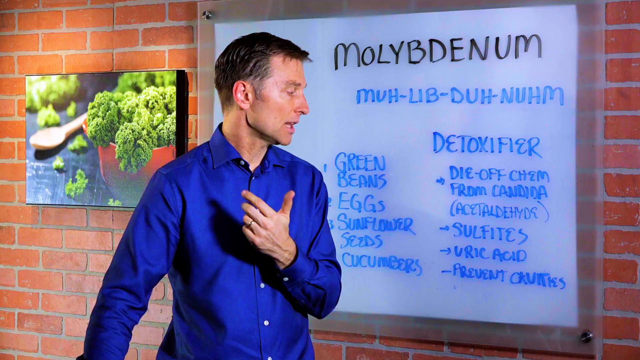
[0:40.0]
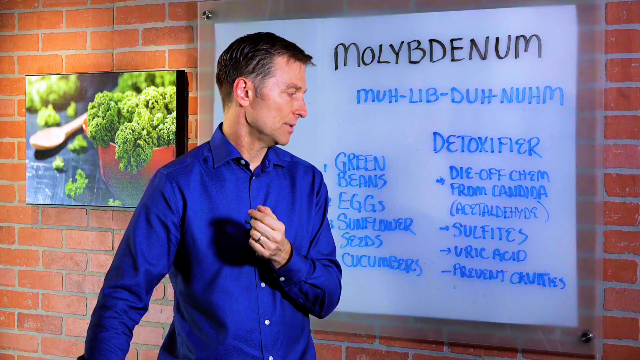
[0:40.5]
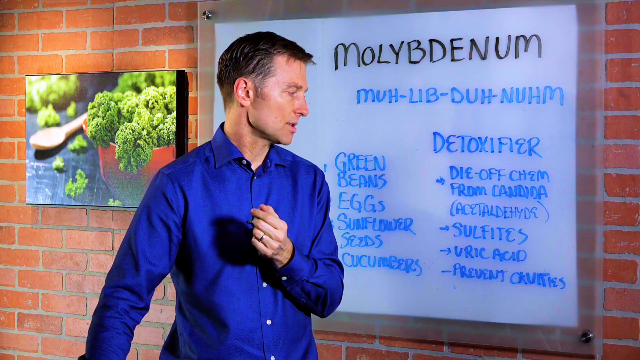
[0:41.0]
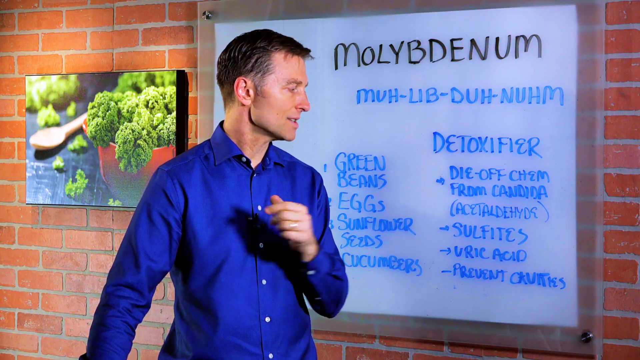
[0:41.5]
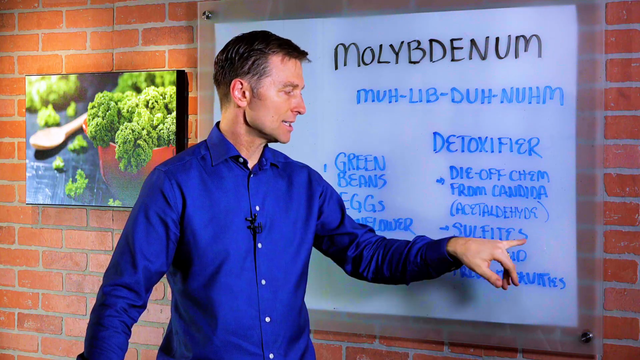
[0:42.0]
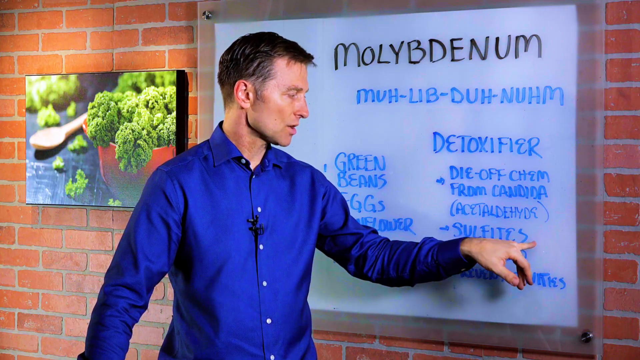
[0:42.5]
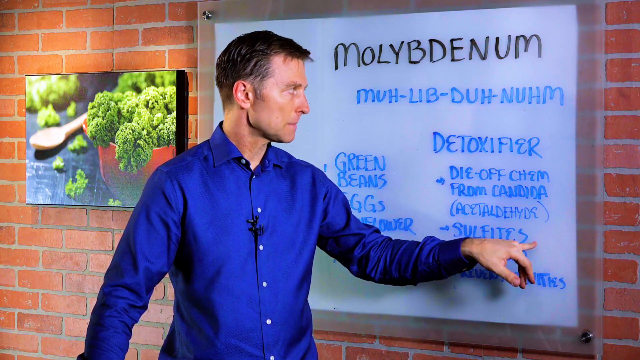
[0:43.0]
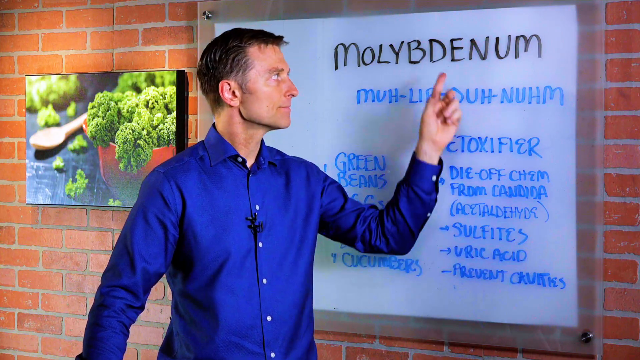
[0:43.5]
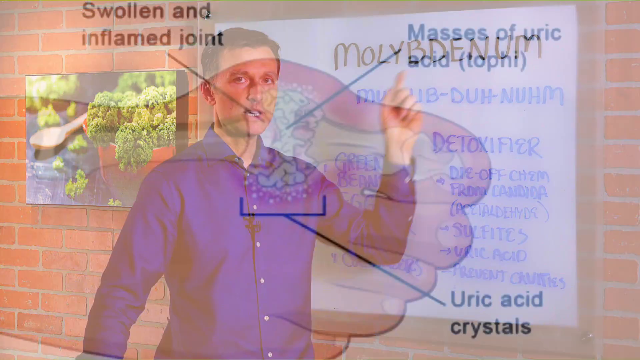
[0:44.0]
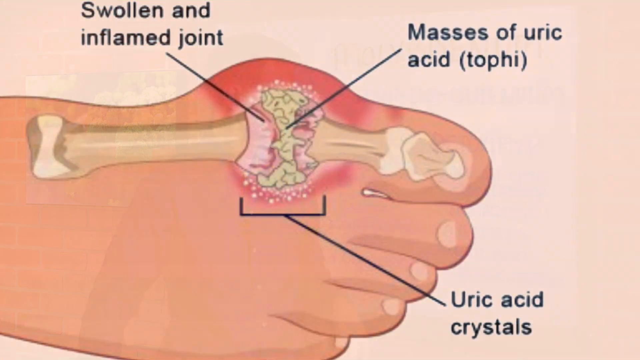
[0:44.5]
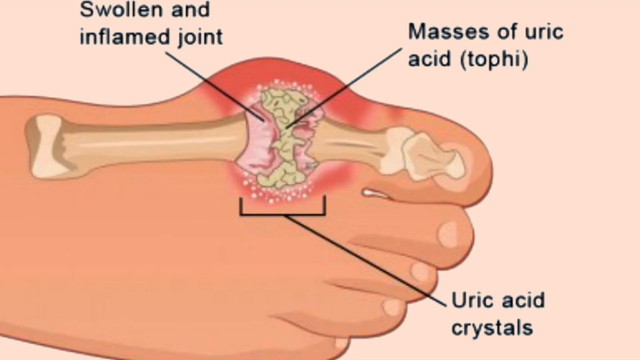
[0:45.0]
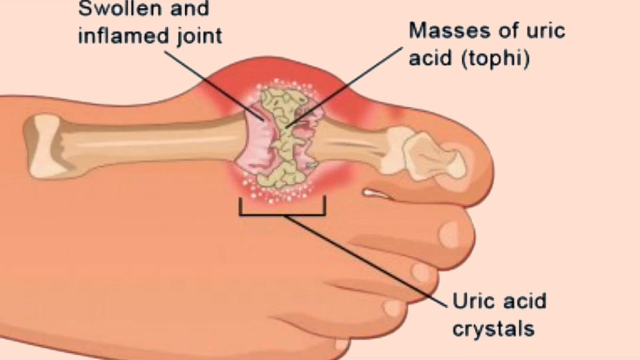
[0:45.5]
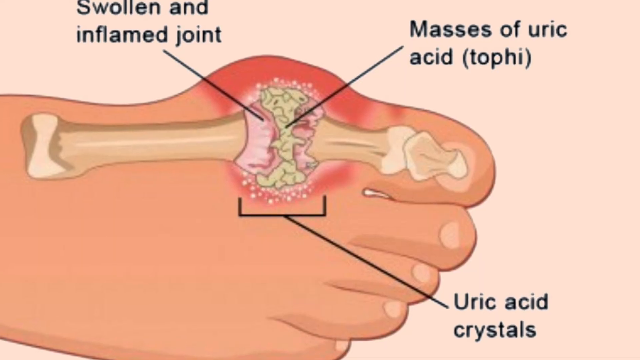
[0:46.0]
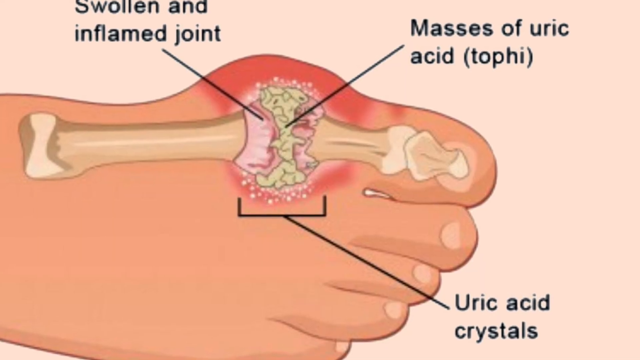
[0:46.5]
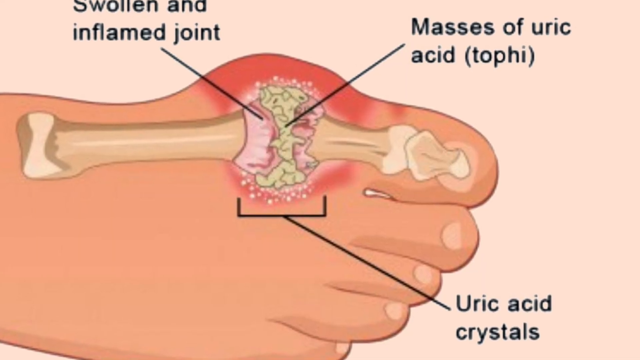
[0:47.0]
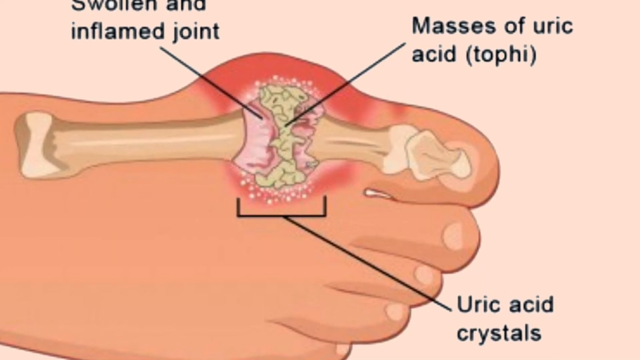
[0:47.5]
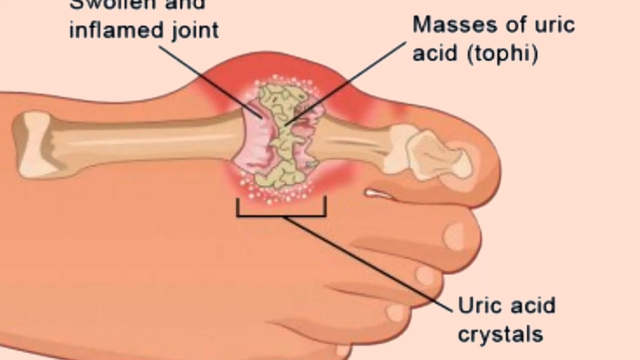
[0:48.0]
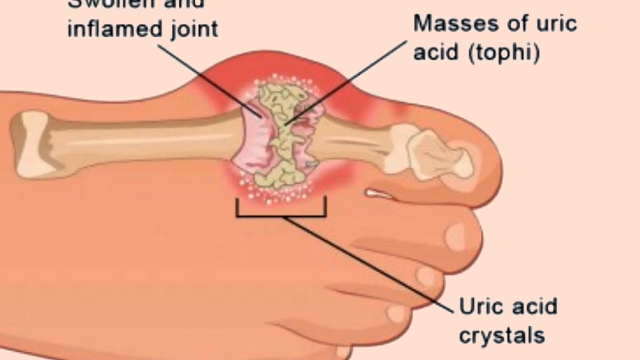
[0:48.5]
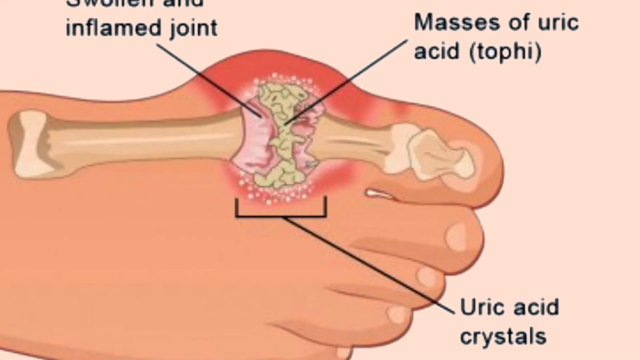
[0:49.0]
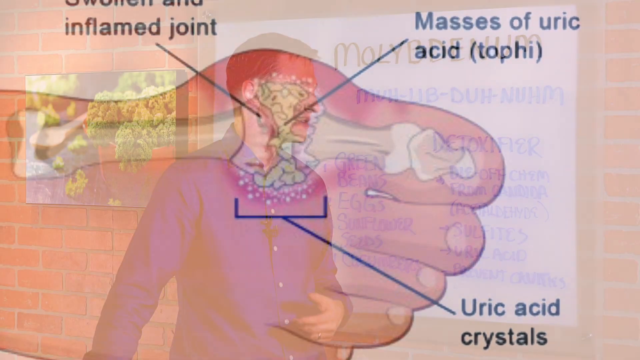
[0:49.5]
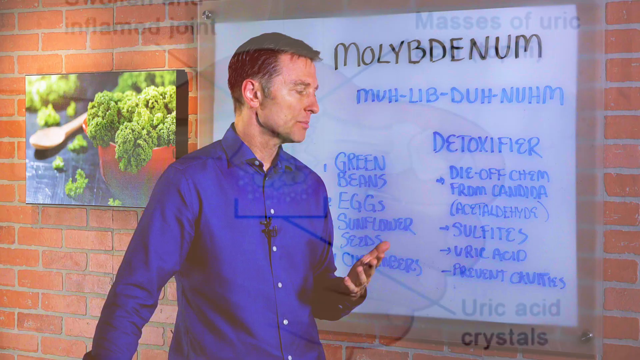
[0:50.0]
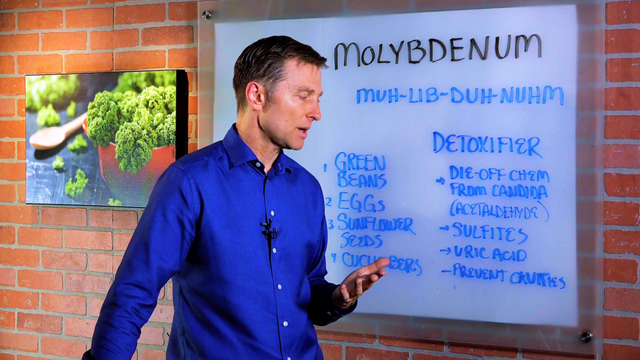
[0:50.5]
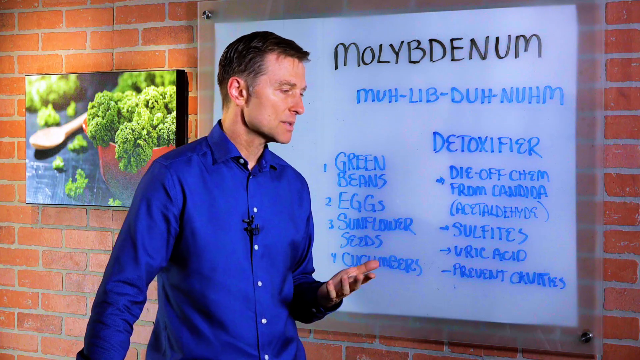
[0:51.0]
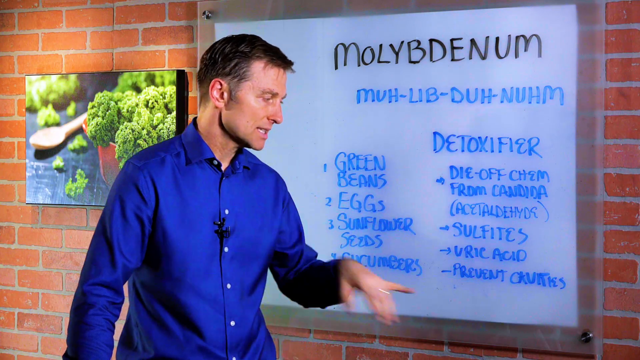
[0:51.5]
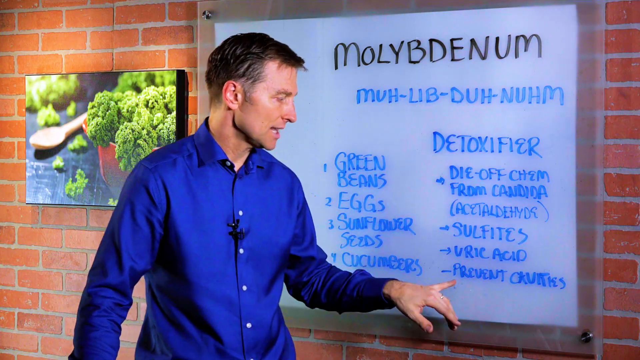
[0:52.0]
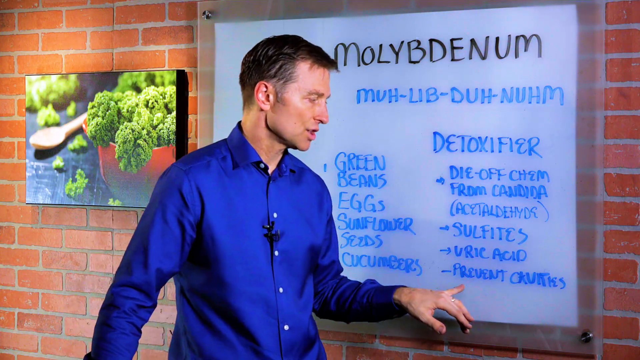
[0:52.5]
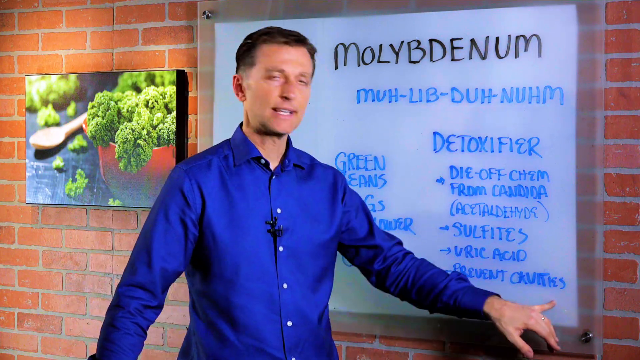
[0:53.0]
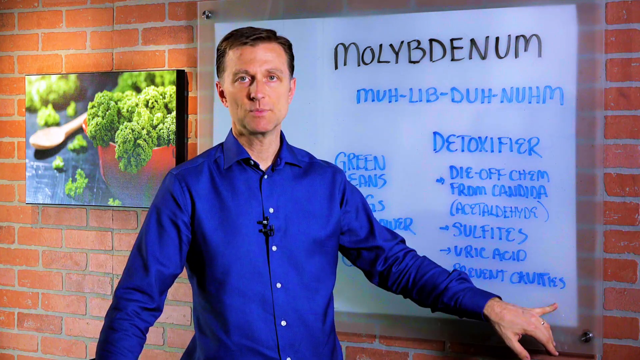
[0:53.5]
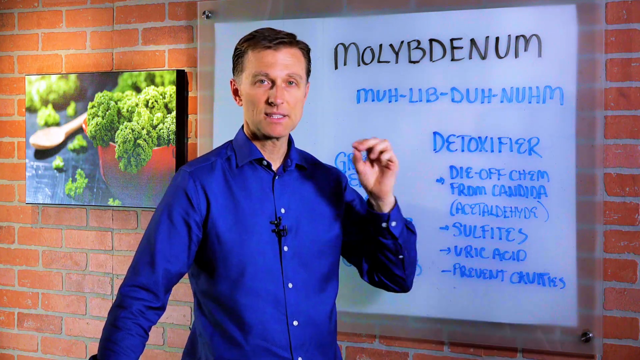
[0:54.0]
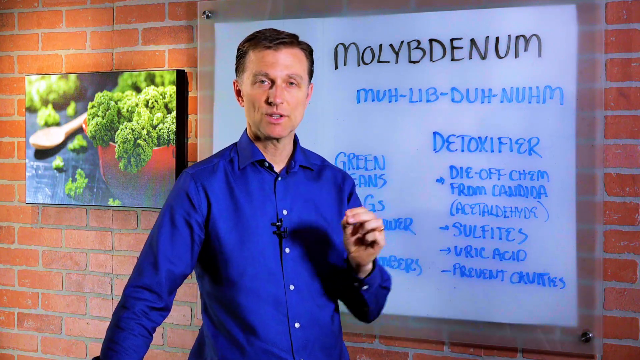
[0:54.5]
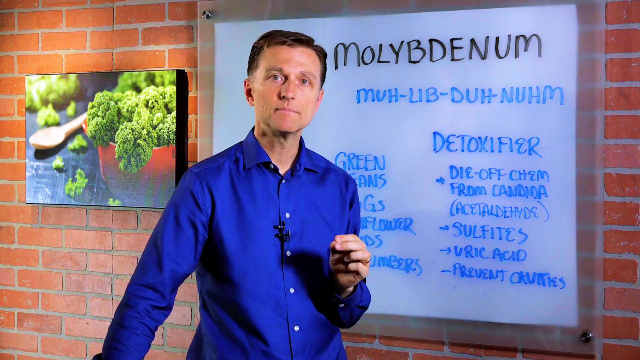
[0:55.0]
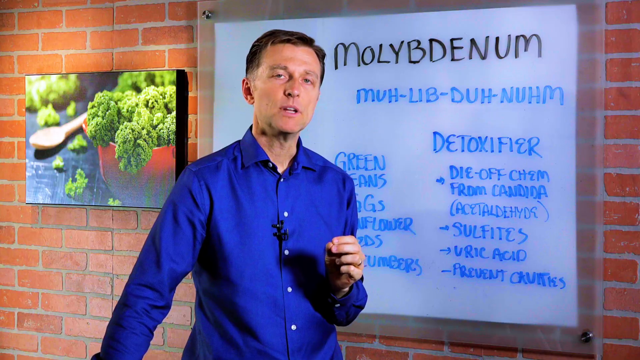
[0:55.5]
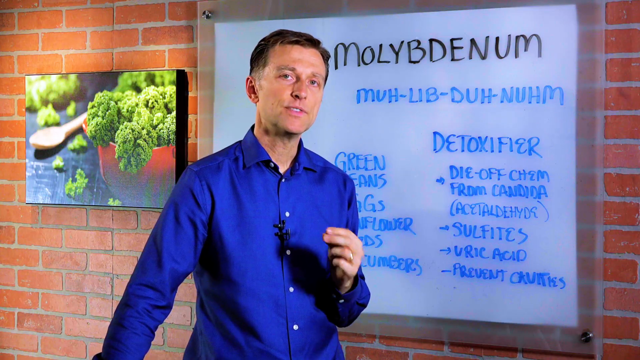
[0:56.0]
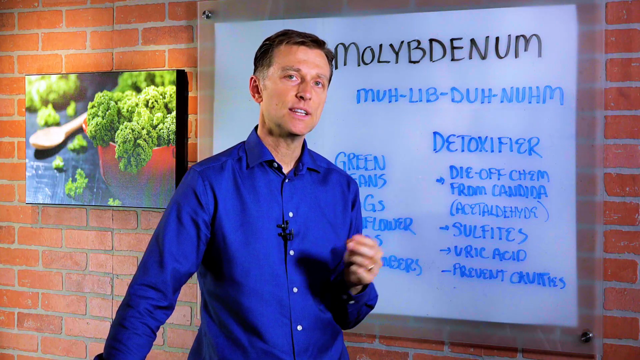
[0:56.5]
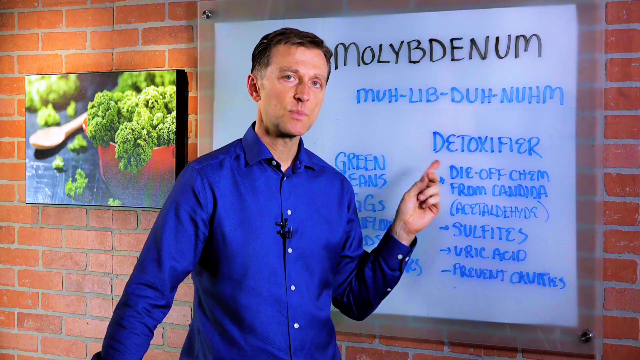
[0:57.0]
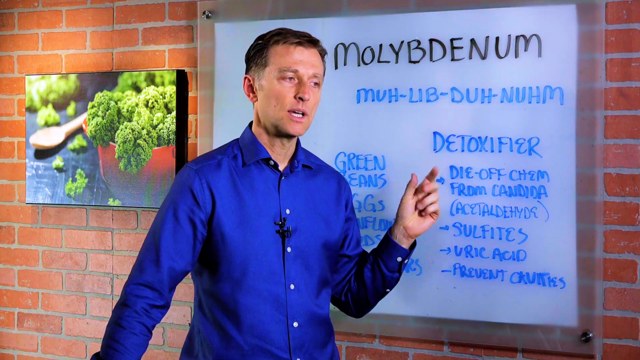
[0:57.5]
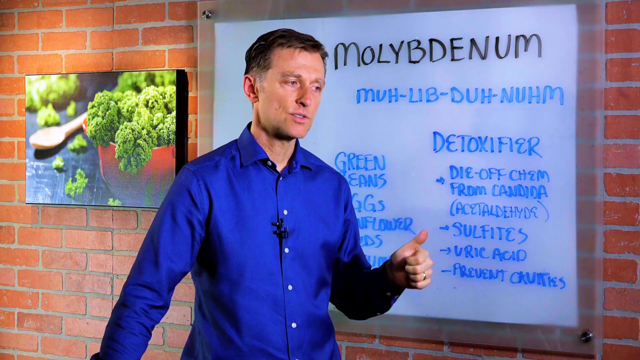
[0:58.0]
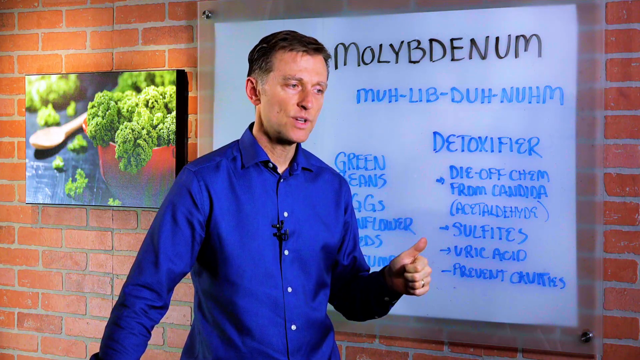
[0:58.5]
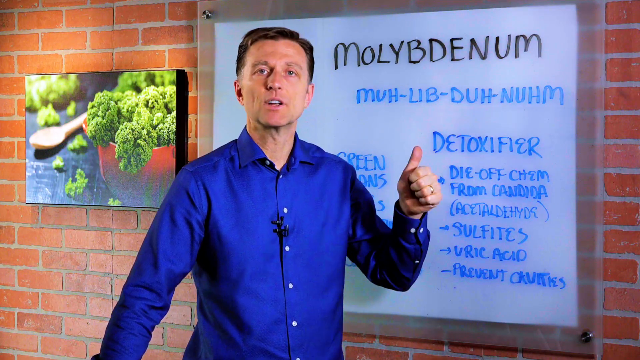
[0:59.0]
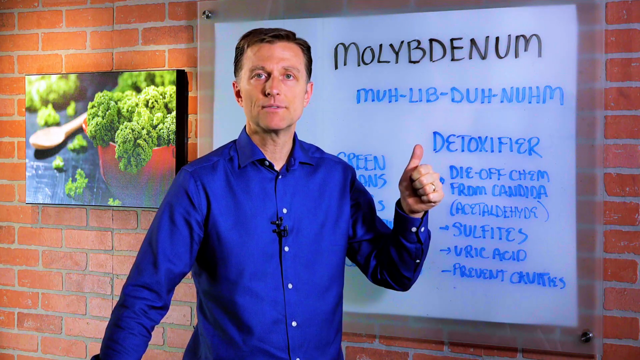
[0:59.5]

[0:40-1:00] The male talks with his head tilted down and towards the left, reading text off his screen. His left hand and forearm are bent at around chest level. He points with his little finger towards one of the items of text on the screen, "sulfites," on the right-hand side of the word, then moves his index finger to point to the middle of the word at the top right-hand side of the screen. Next comes a colour drawing of a foot seen from the top. The bone is visible, the central area is red, and there are things between the joints. Three labels in black text have black lines pointing towards the mid-toe area: "swollen and inflamed joint" in the top left, "masses of uric acid (tophi)" in the top right, and "uric acid crystals" in the bottom right. All the lines point to around the same section of the diagram, in the centre of the screen, and the image zooms in slowly. The male then talks again, pointing his little finger towards the "prevent cavities" text in the bottom right-hand side of the screen while looking down with his head rotated to the left, before moving his head back to look at the camera. His left hand makes another gesturing motion, and his left index finger points towards the word "detoxifier" on the screen behind him while he still looks directly at the camera. He then looks to the side of the camera and makes a thumbs-up gesture while looking at the camera.